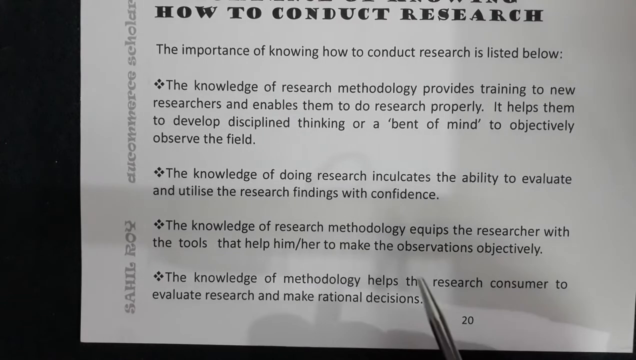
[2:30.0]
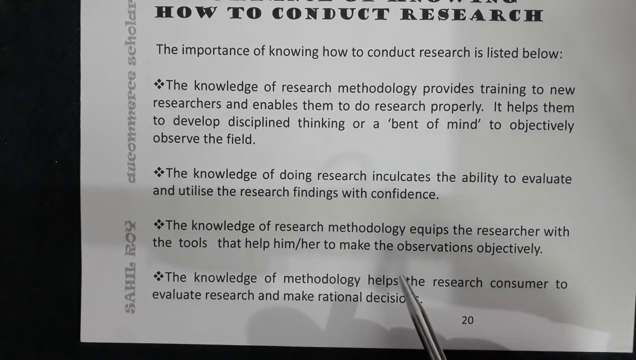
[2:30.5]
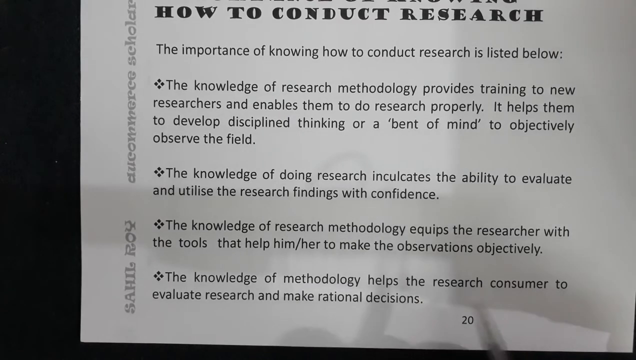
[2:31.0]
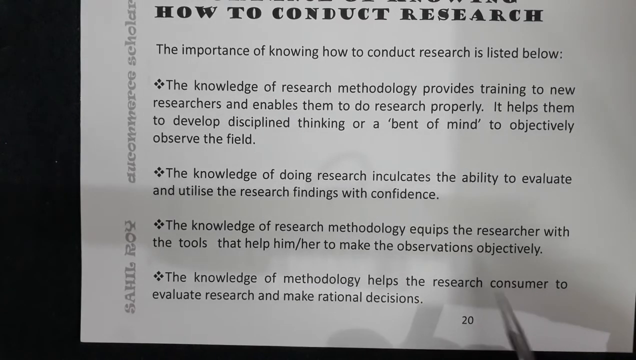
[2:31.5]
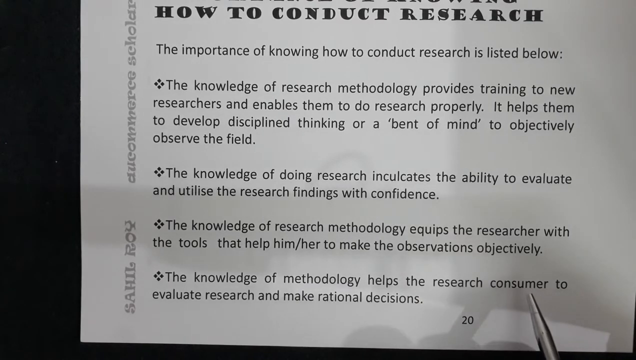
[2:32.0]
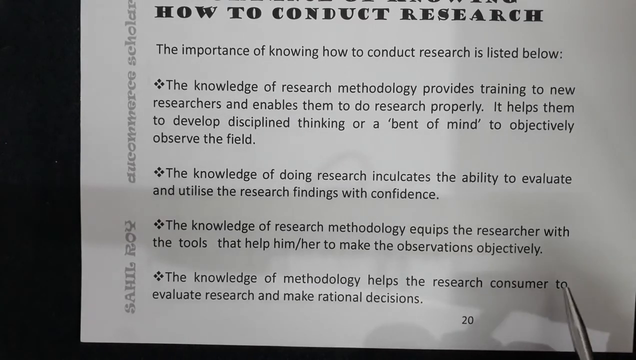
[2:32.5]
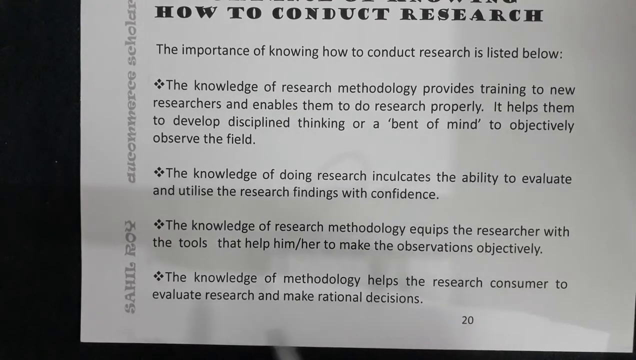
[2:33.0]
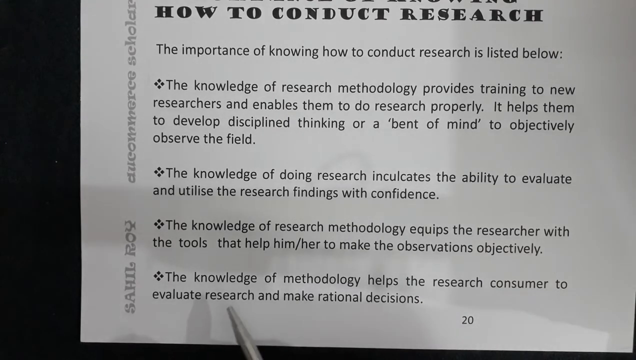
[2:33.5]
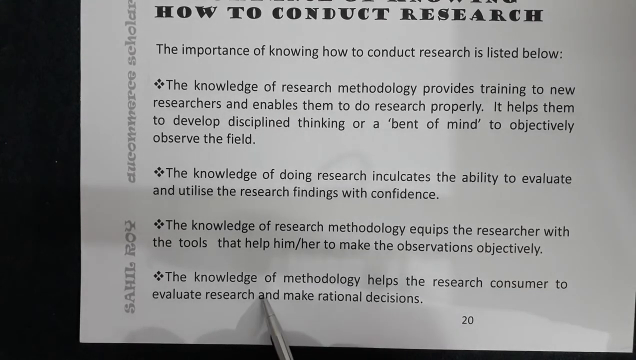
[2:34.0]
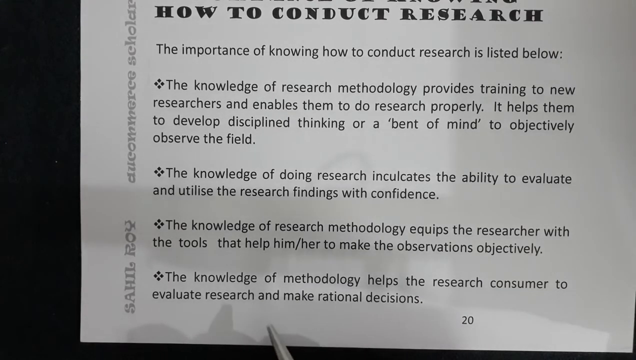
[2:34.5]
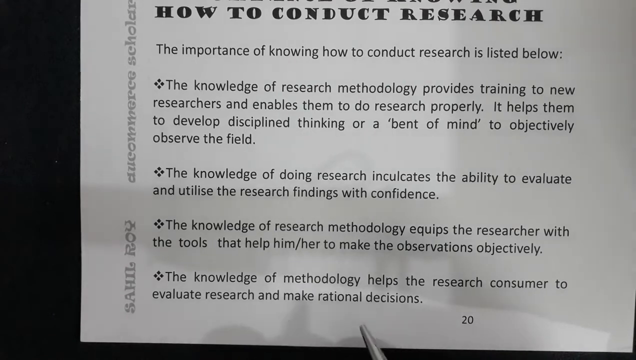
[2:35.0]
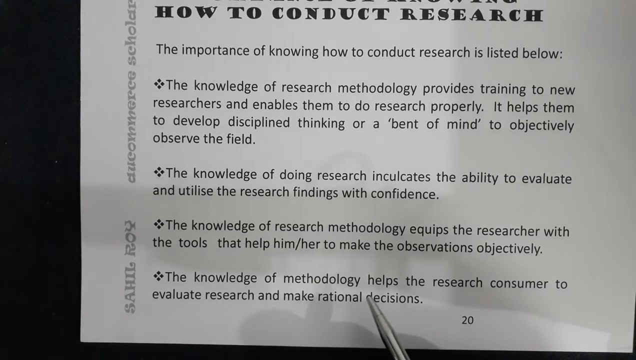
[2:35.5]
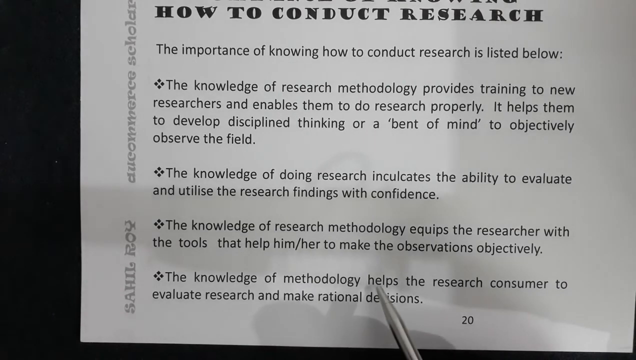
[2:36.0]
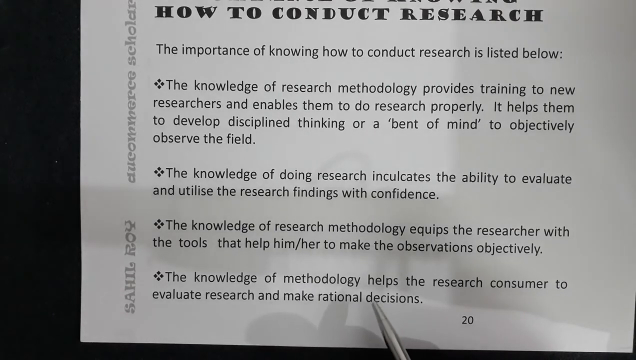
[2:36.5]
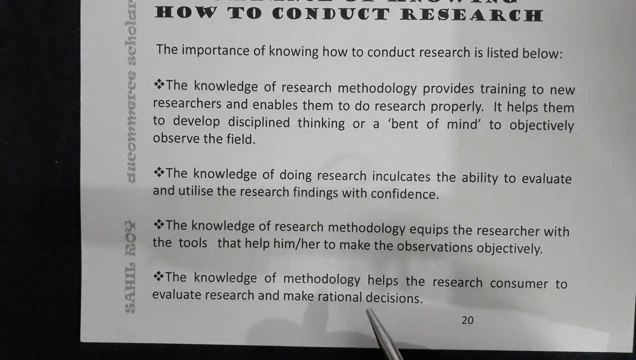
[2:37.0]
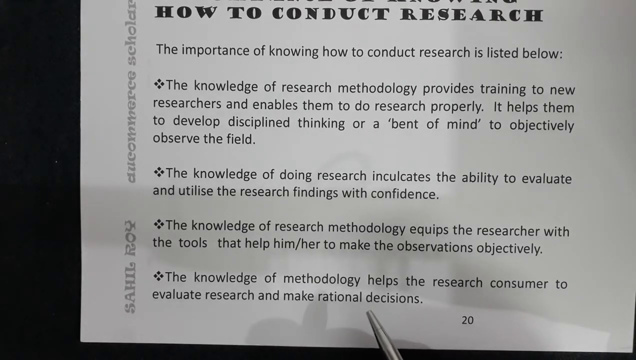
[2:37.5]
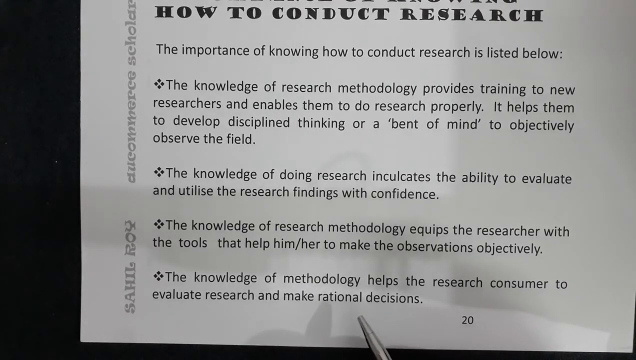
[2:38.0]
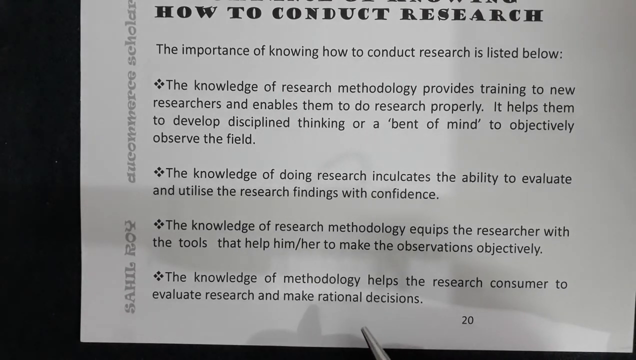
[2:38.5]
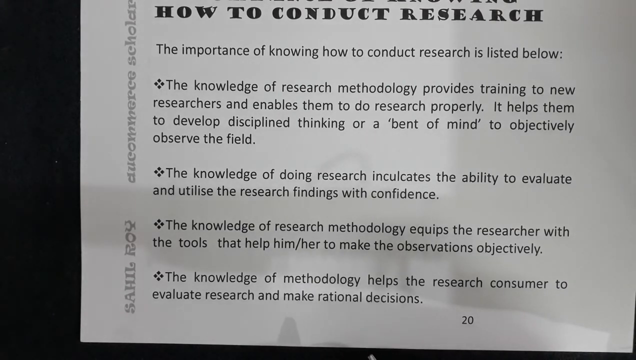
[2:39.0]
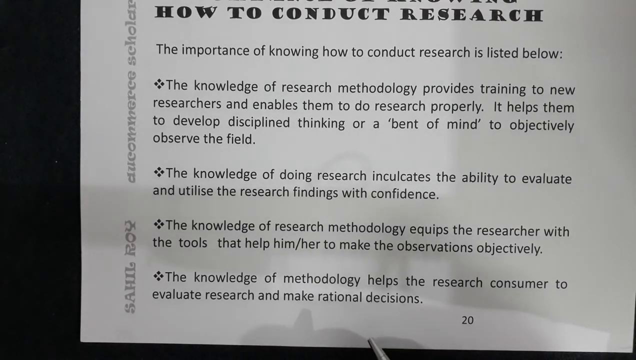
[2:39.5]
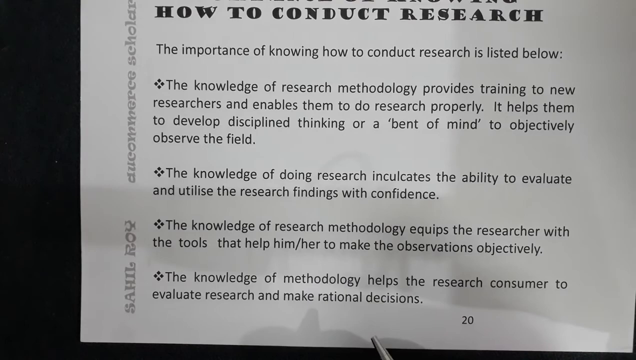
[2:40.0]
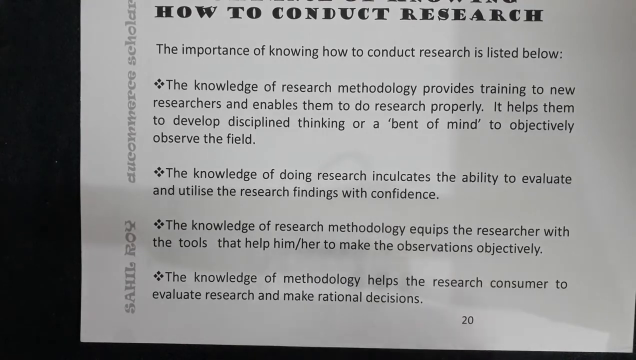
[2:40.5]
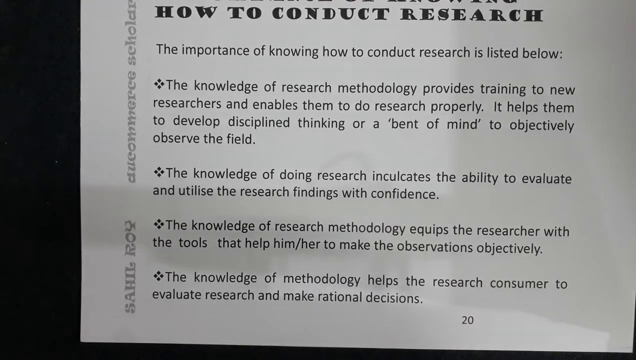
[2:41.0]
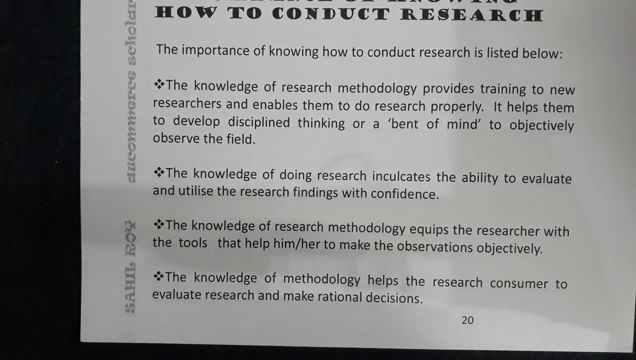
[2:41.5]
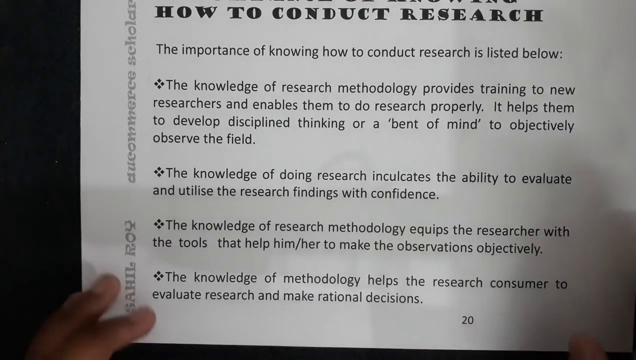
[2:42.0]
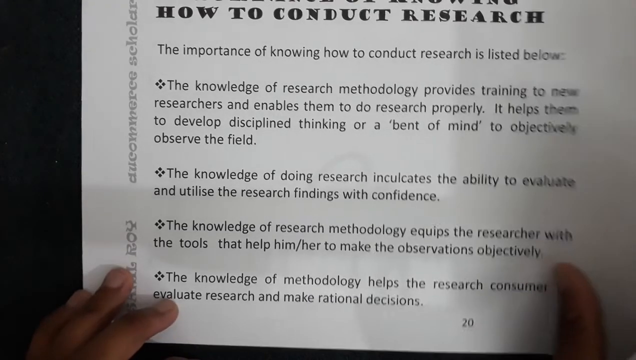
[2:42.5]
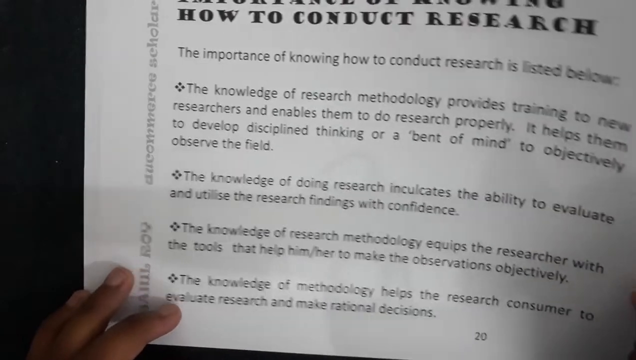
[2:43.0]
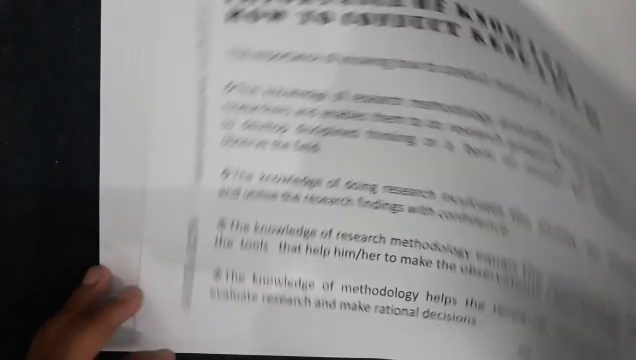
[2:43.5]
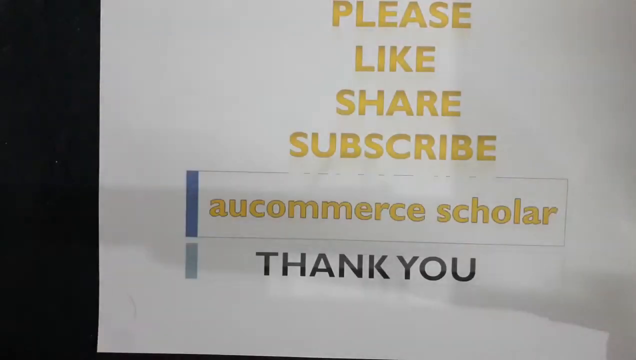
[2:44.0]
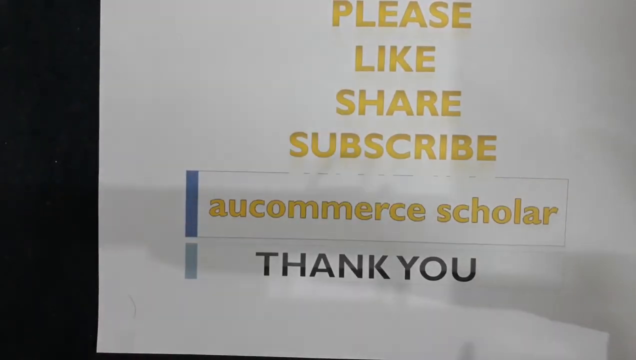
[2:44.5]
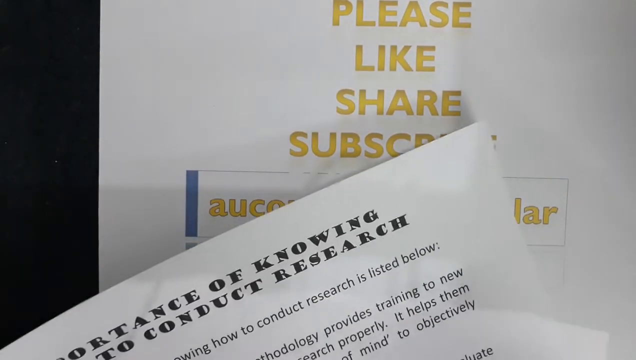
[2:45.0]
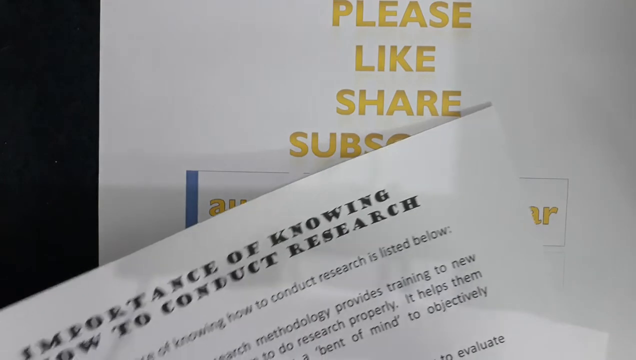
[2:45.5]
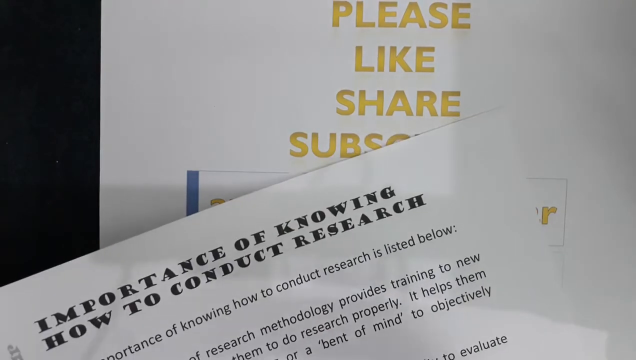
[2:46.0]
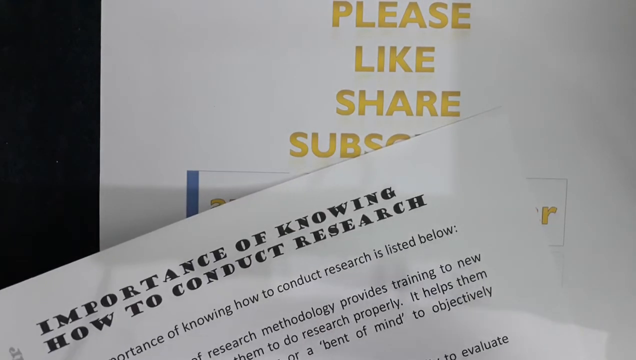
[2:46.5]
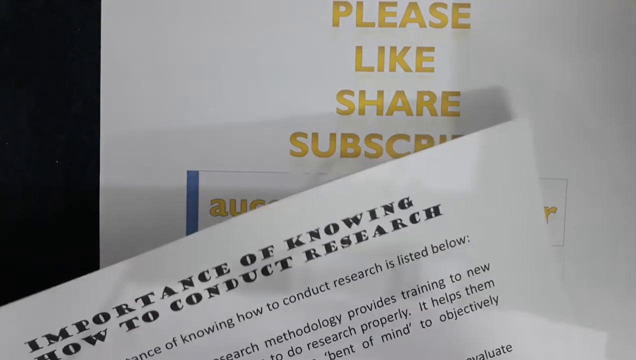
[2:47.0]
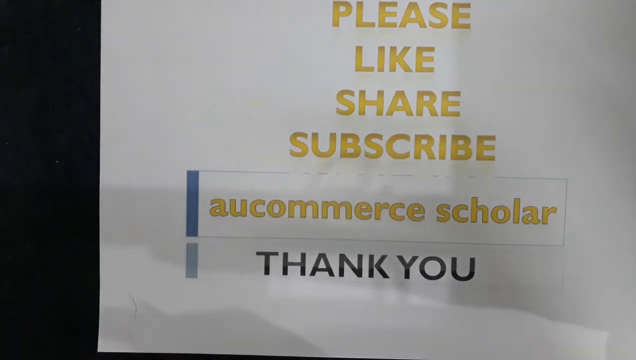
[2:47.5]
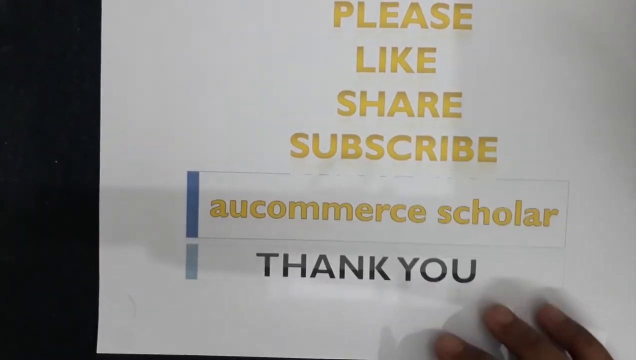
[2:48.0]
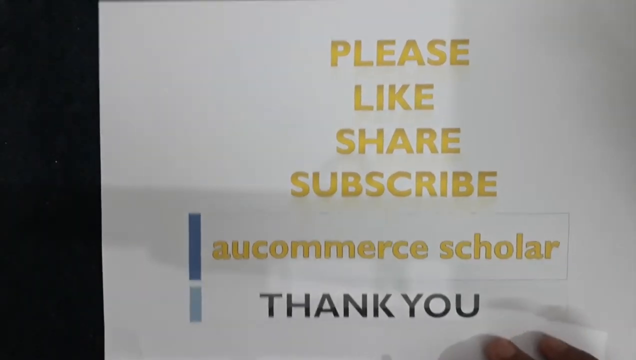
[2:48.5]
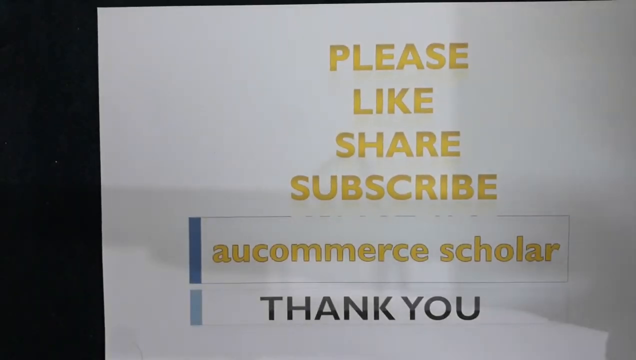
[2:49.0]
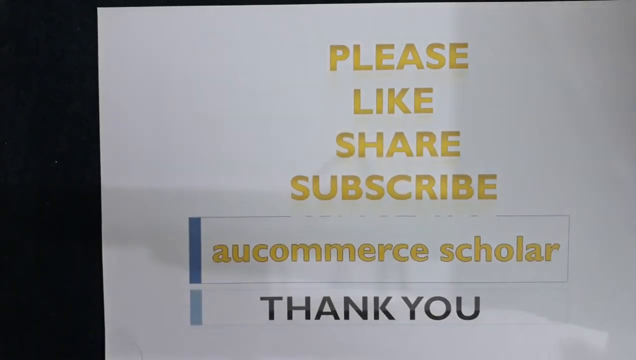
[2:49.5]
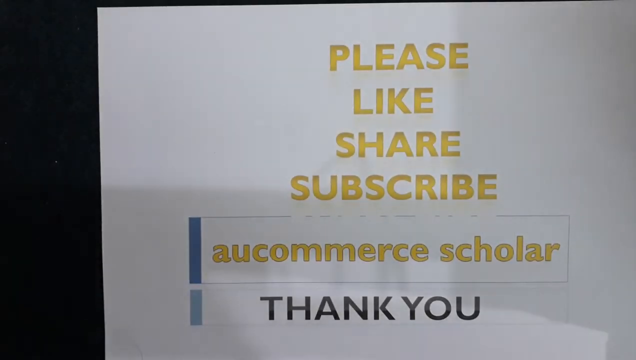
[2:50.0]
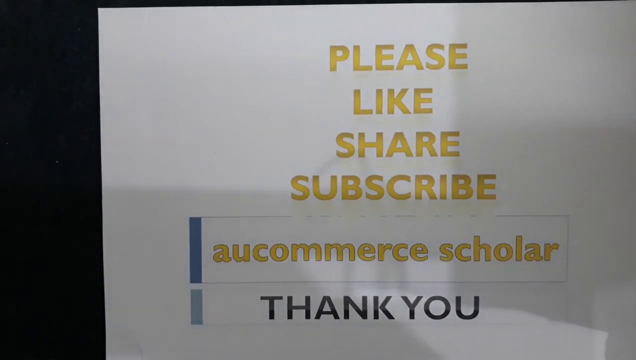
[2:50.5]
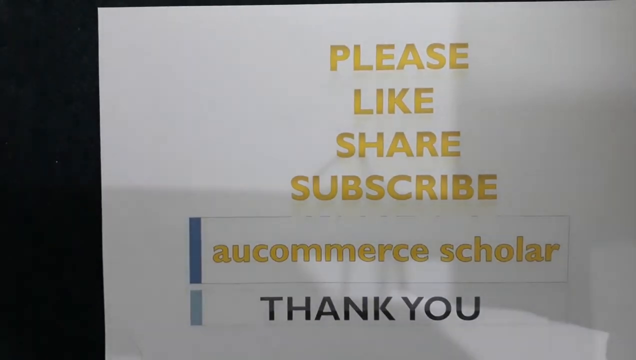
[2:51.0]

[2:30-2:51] The sheet says "the importance of knowing how to conduct research" in bold at the top; it is a white sheet of paper that looks like a printed sheet. Below are bullet points, including "the knowledge of research methodology equips the researcher with the tools that help him or her to make observations objectively." A person moves a silver pen toward the bottom, then flips the page. The next page reads "please like, share, subscribe, AU commerce scholar, thank you," and the video ends.